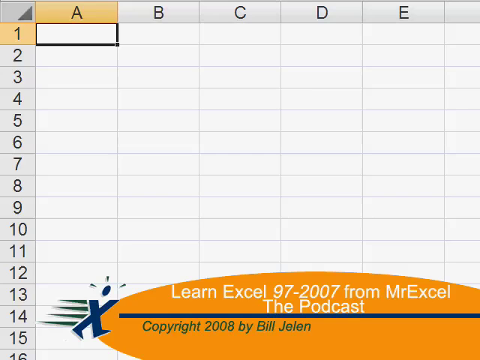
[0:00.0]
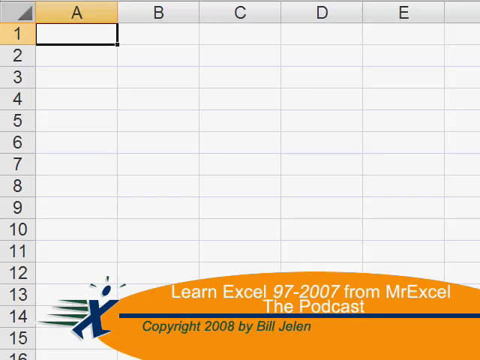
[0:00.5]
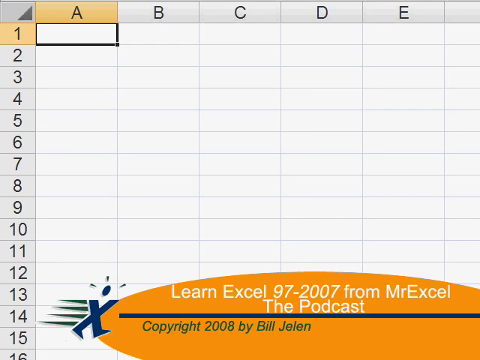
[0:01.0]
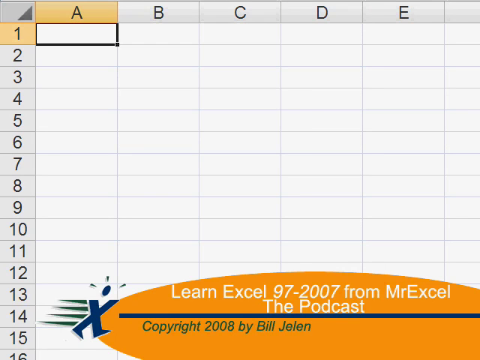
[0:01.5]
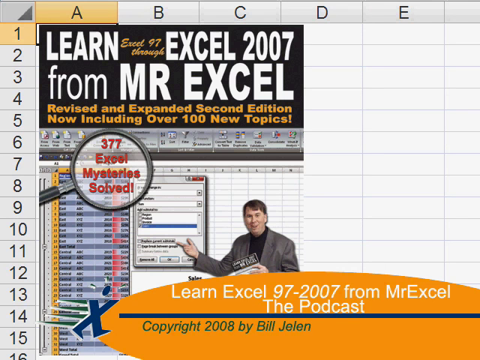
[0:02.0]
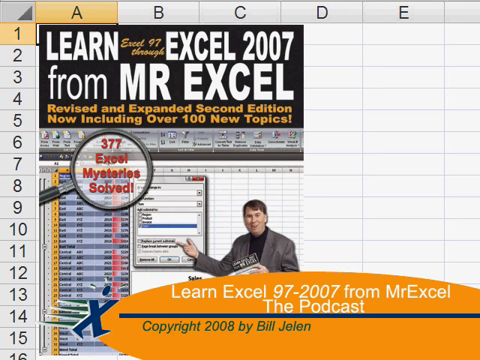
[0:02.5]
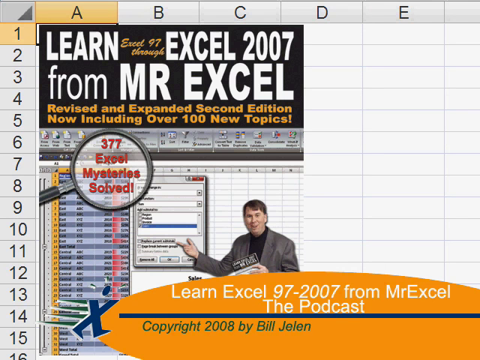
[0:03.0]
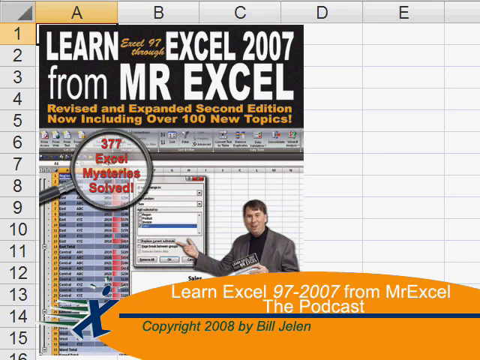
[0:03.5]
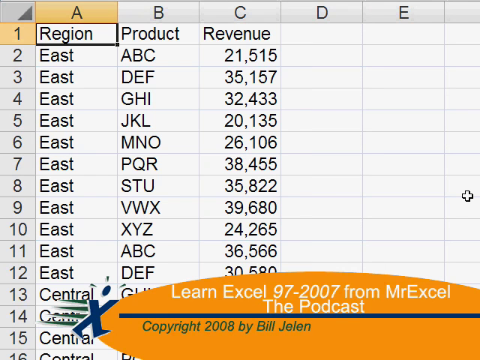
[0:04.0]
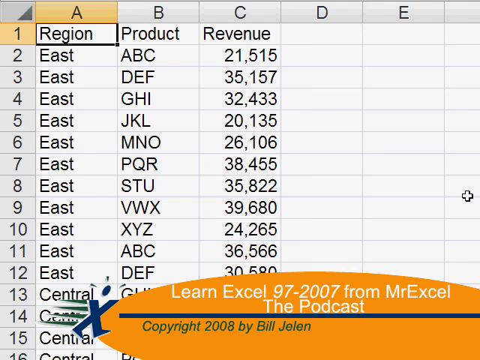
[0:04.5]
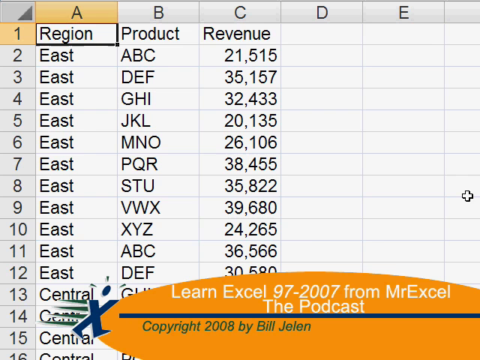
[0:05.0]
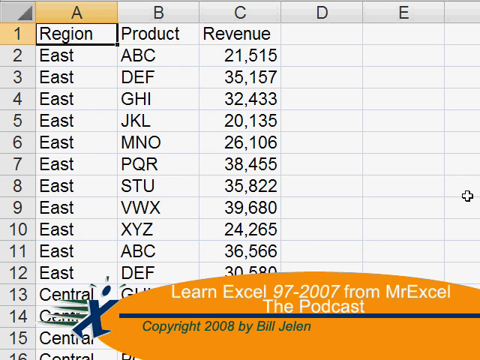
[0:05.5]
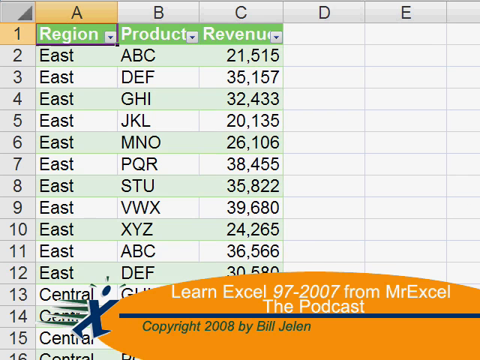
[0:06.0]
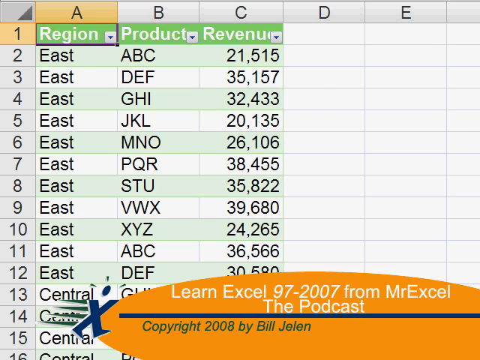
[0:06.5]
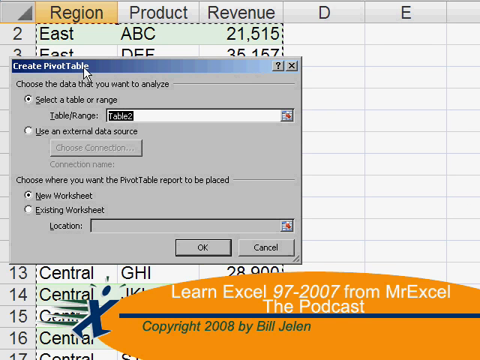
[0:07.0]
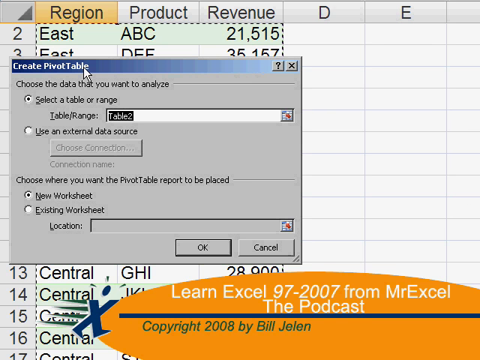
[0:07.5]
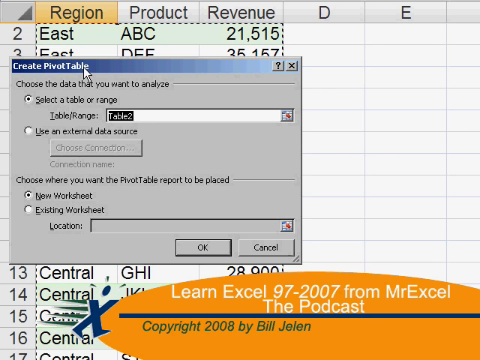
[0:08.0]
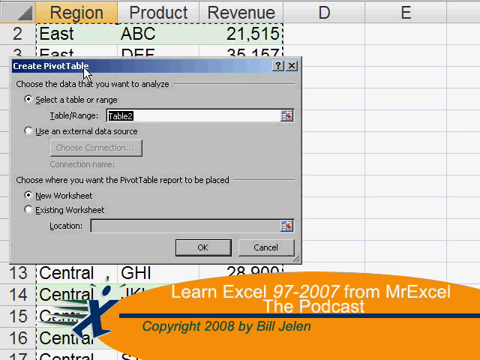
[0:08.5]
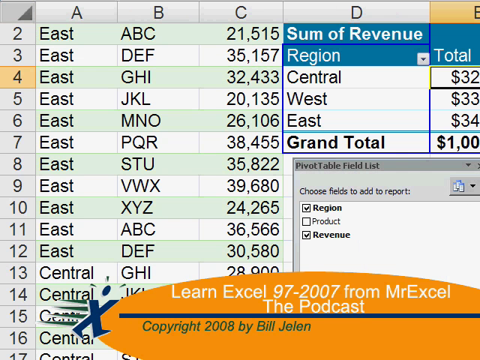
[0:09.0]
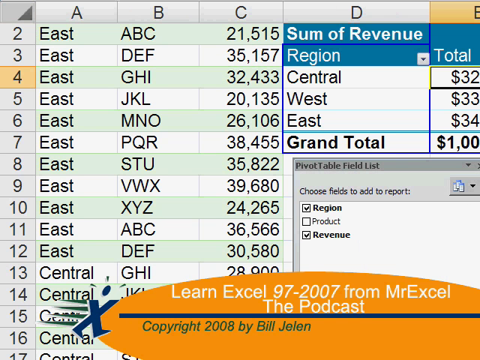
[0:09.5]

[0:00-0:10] The video opens on a screenshot of an Excel spreadsheet with five columns across the top lettered A to E and 15 rows numbered down the left-hand side. An orange banner at the bottom of the screen reads "Learn Excel 97 to 2007 from Mr Excel the podcast copyright 2008 by Bill Gillian". Another screen then pops up over the spreadsheet. At its top it says "Learn Excel 97 through Excel 2007 from Mr Excel, revised and expanded second edition now including over 100 topics". It includes an image of a man in a jacket looking at the camera and smiling while pointing with his right hand, as well as a magnifying glass image, and in the center it says "377 Excel Mysteries Solved". The spreadsheet then has some data in it, its top line turns green, and a box pops up saying "create pivot table".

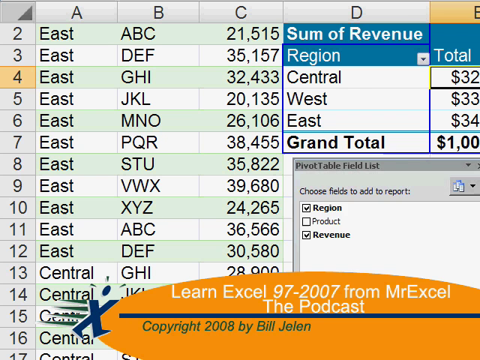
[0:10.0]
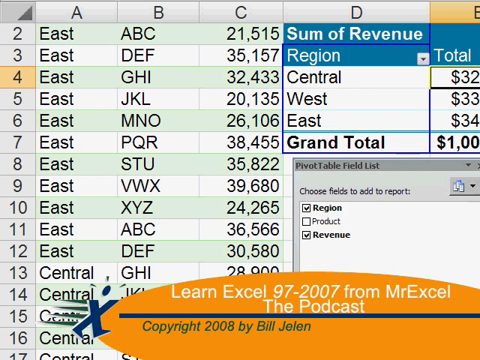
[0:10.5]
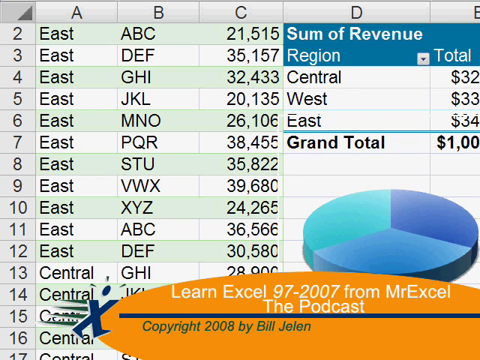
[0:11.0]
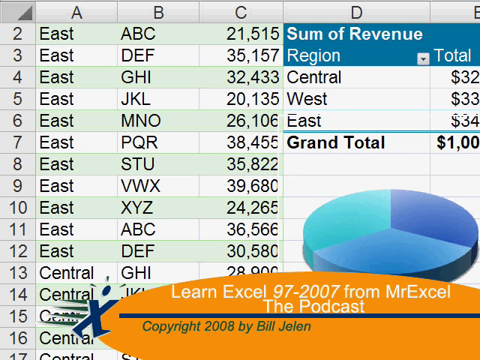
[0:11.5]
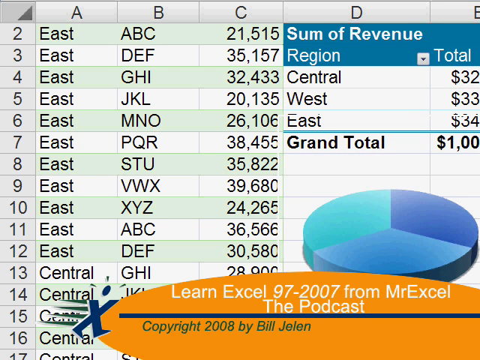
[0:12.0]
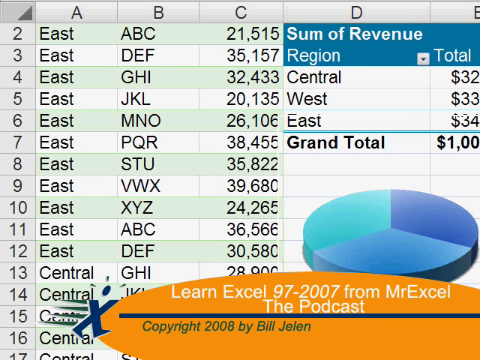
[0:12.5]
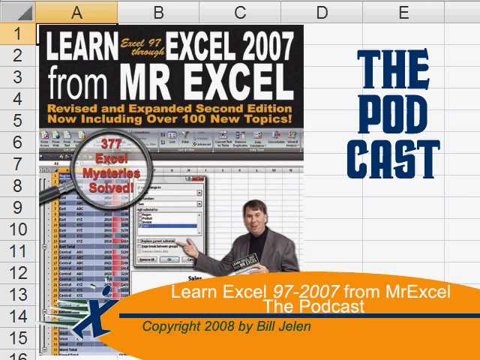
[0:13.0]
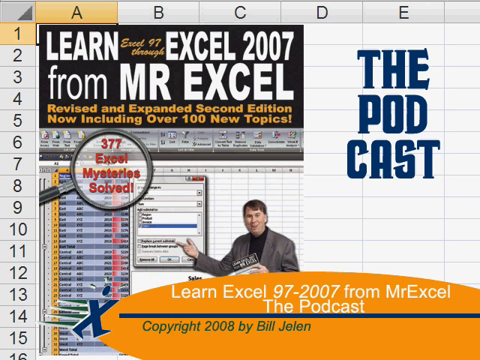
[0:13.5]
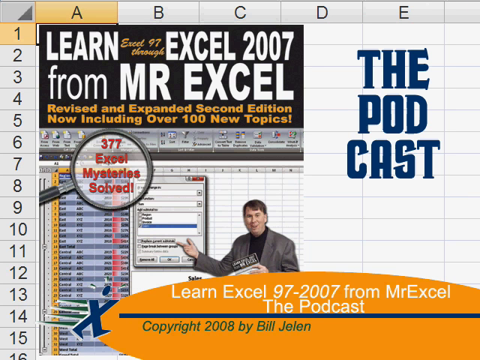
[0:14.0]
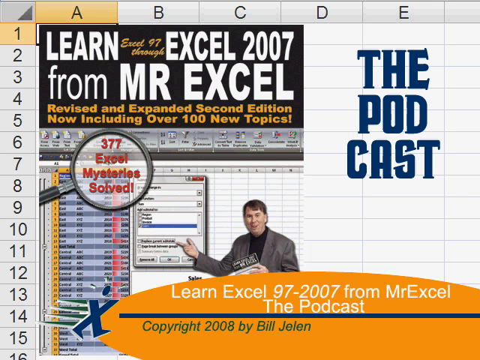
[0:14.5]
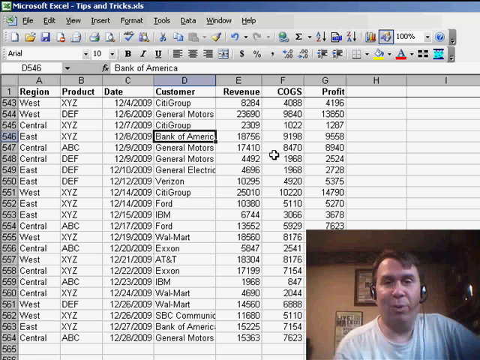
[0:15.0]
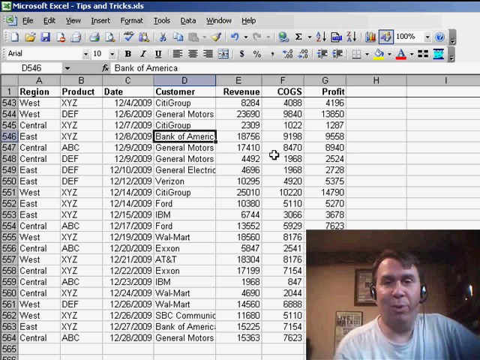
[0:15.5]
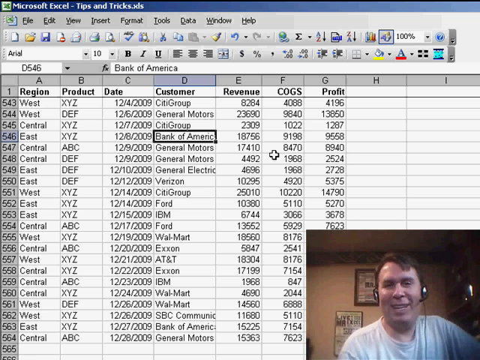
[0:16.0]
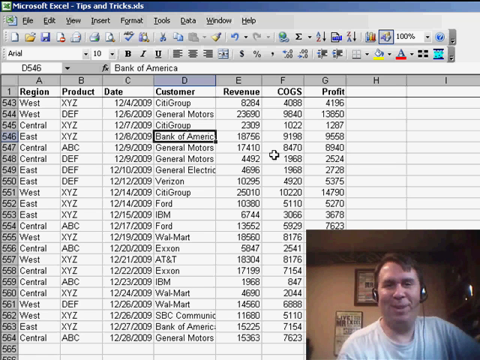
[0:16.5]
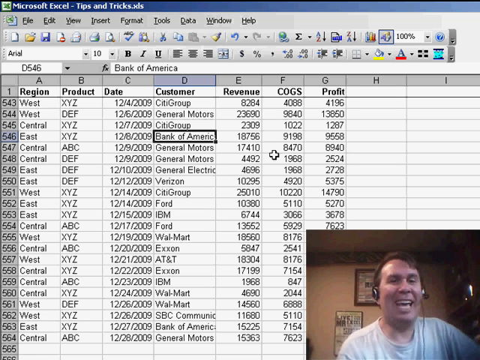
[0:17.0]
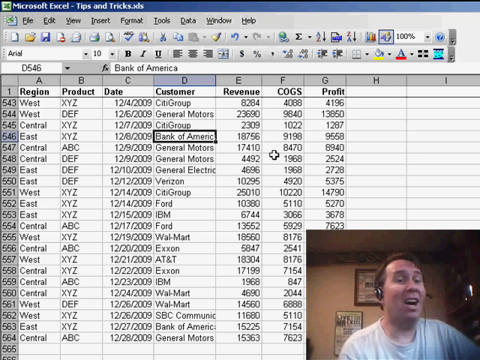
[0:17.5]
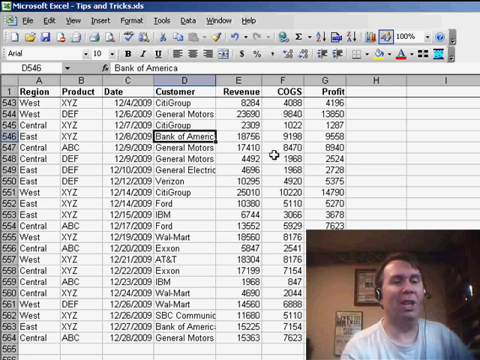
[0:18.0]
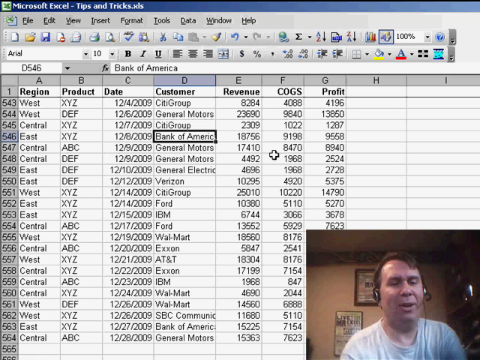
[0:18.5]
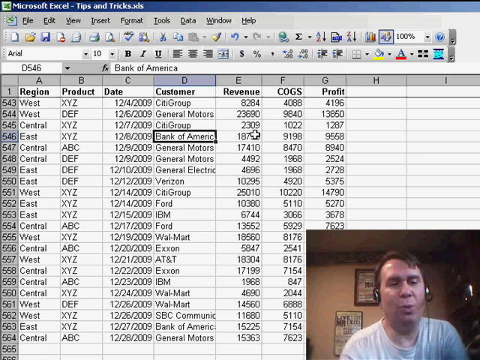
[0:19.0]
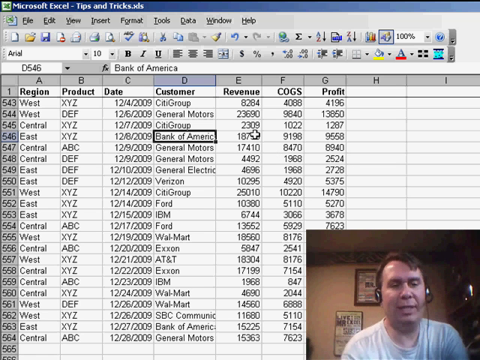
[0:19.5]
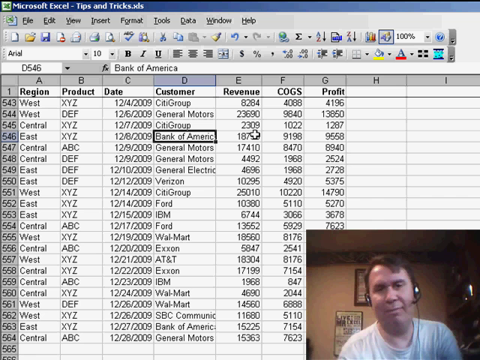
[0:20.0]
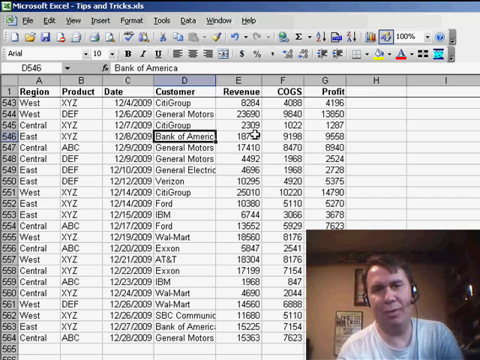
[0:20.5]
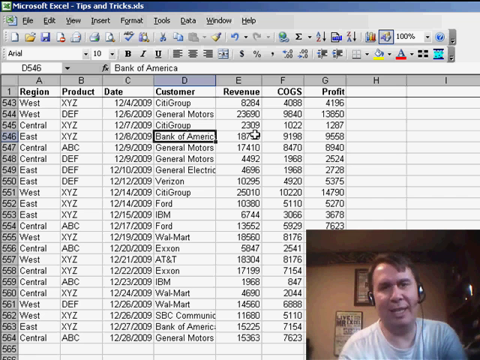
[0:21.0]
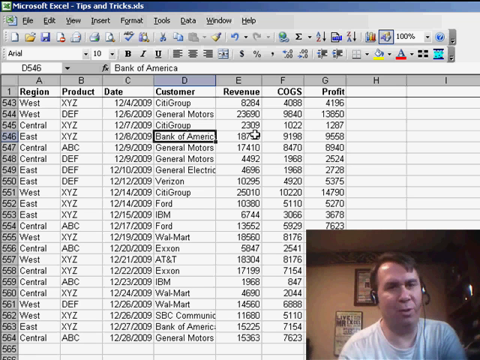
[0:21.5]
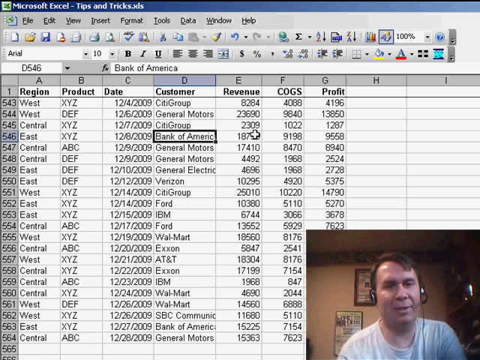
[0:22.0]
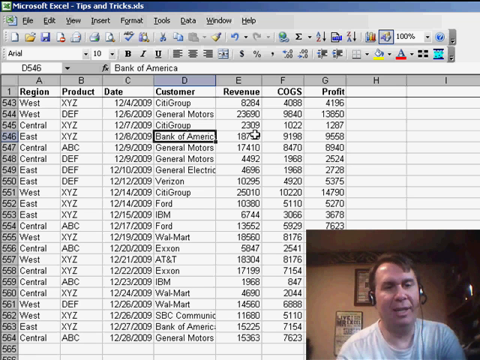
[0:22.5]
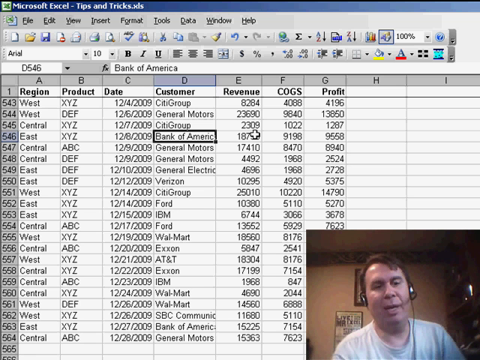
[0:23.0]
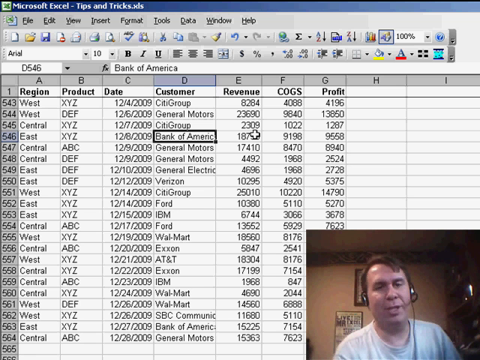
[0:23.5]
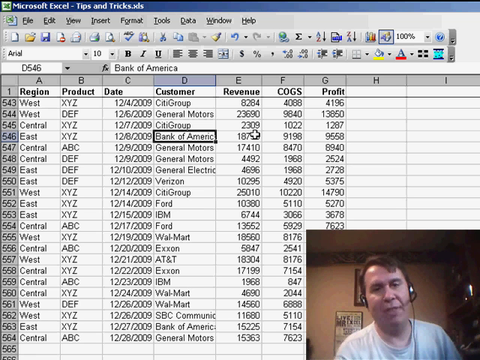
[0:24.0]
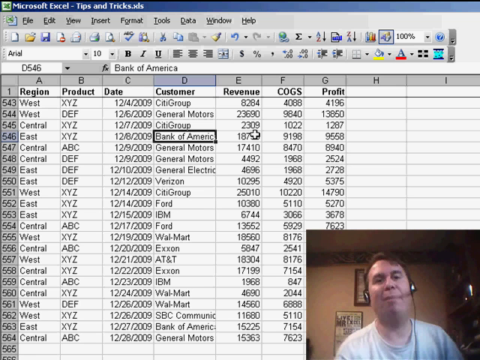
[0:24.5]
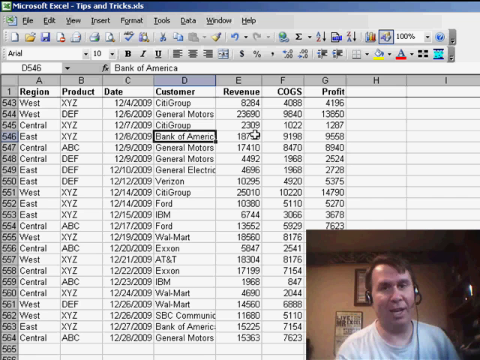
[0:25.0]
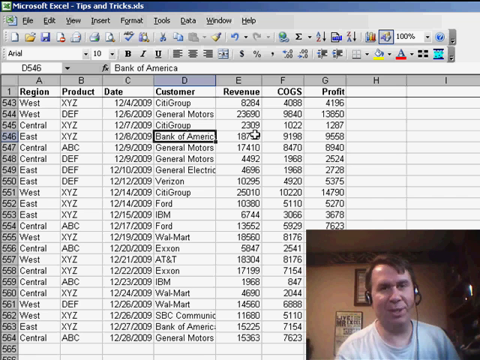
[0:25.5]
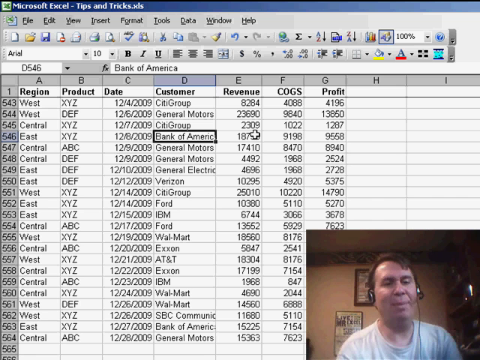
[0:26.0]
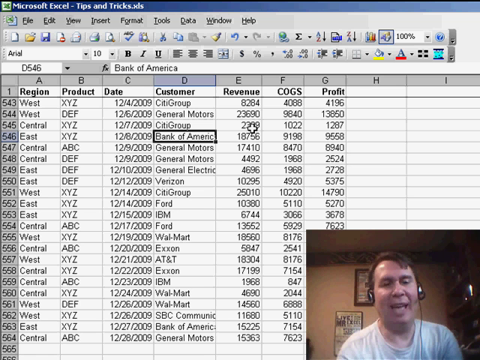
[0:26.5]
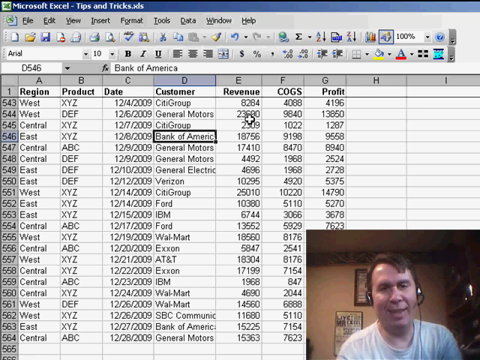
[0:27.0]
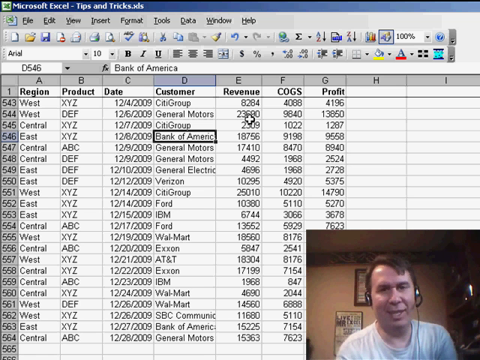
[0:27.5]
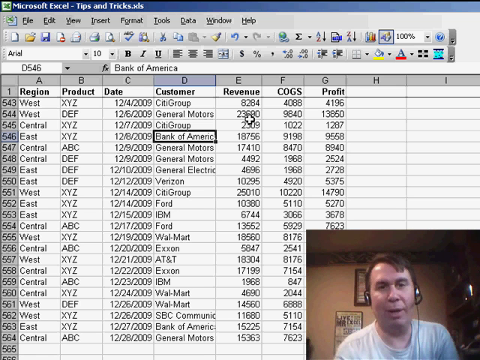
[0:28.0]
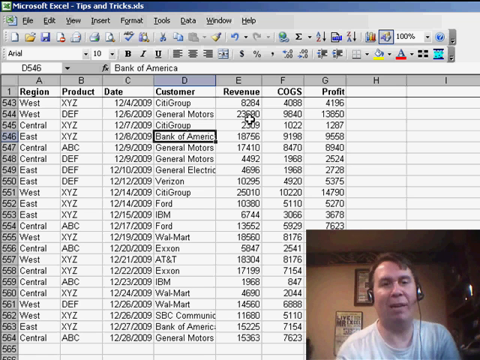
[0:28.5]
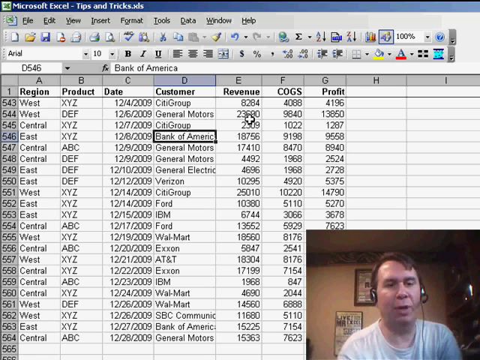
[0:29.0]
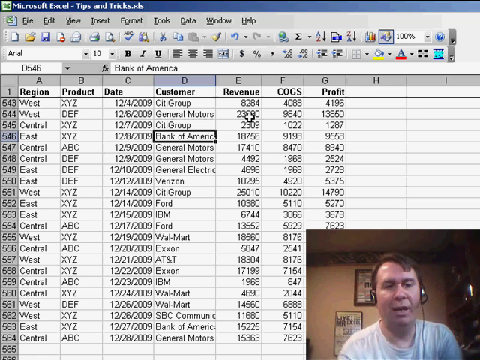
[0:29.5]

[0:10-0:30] The Excel spreadsheet shows alternate lines in pale green and white. Columns A, B and C contain data, while column D contains a different table that says "sum of revenue", broken down by region (central, west and east) and totaled at the bottom. Below this is a pie chart with three sections. The screen then returns to the advert with the man in the jacket; on its right-hand side, in big blue letters, it says "the podcast". Next comes an Excel spreadsheet populated with data broken down by region, product, date, customer, revenue, COGS and profit. The customers include Ford, Walmart, IBM and General Motors, among others. In the bottom right-hand corner of the screen is webcam footage of a man who appears to be the same man as in the ad. He wears a headset and talks directly to the camera in a fairly dark room.